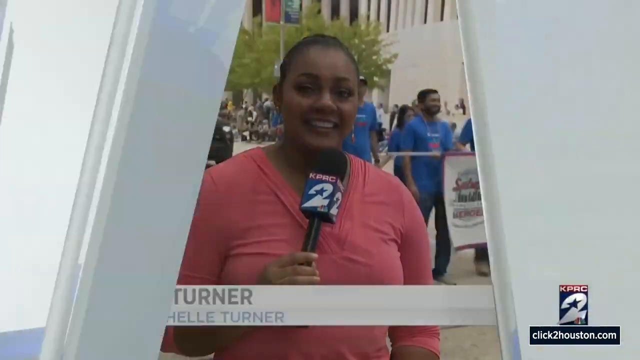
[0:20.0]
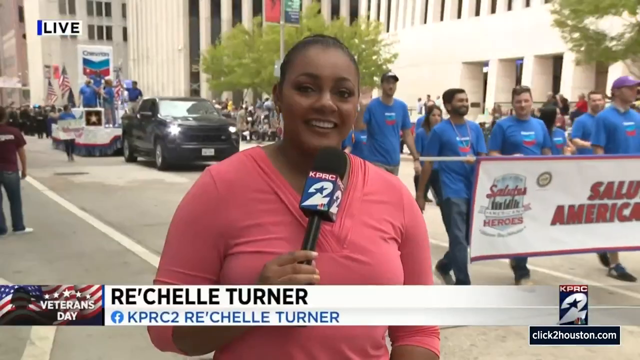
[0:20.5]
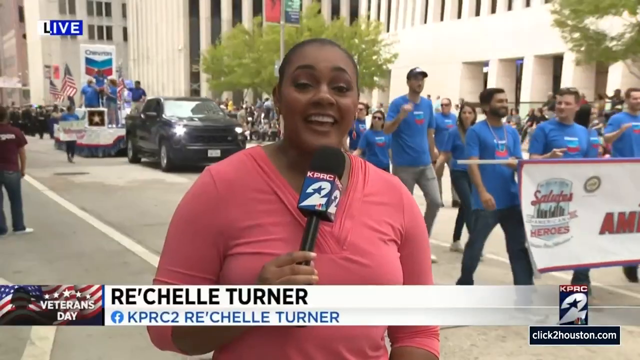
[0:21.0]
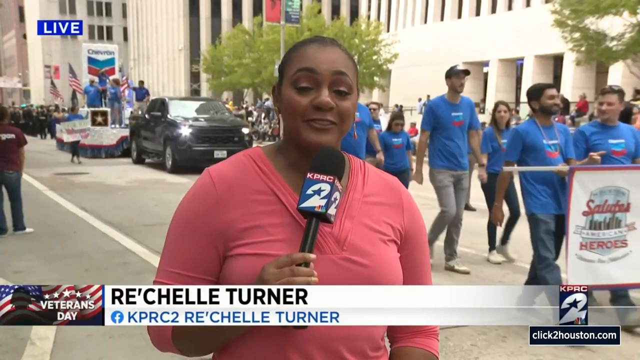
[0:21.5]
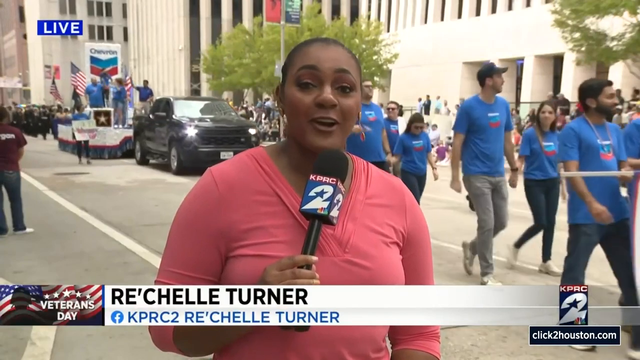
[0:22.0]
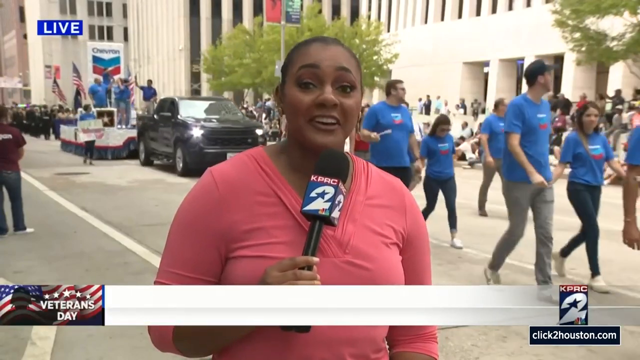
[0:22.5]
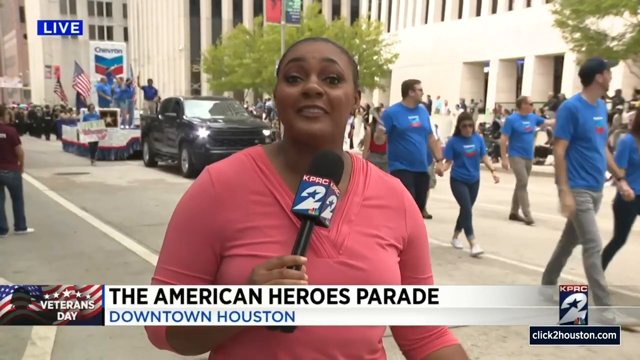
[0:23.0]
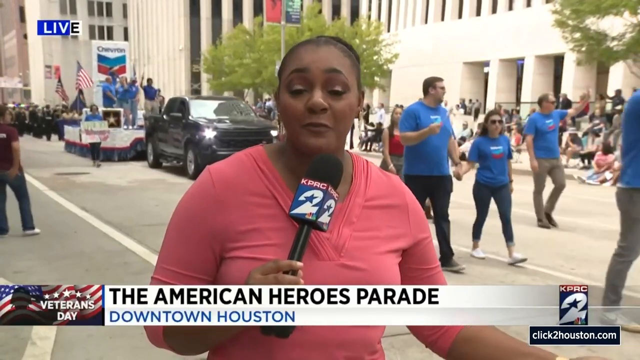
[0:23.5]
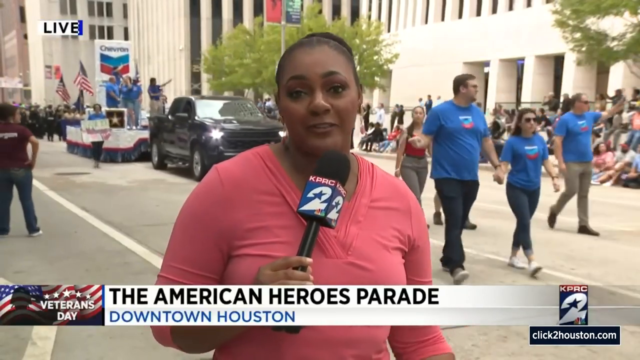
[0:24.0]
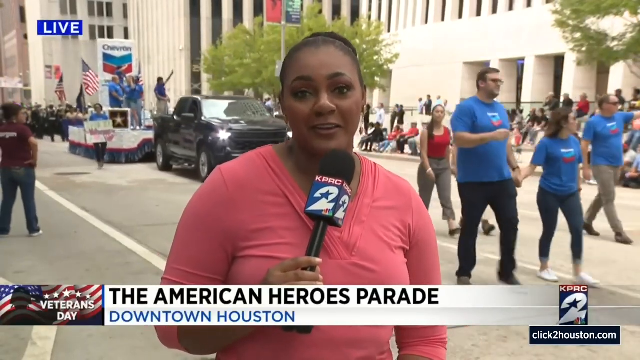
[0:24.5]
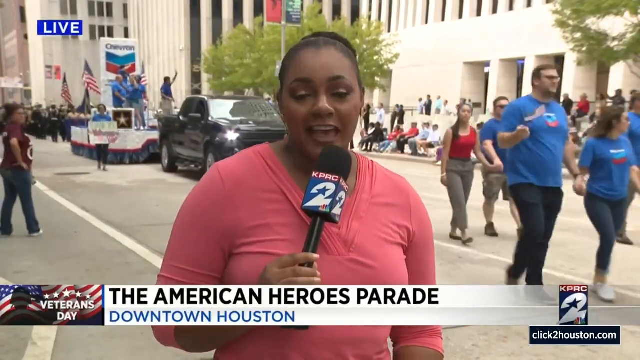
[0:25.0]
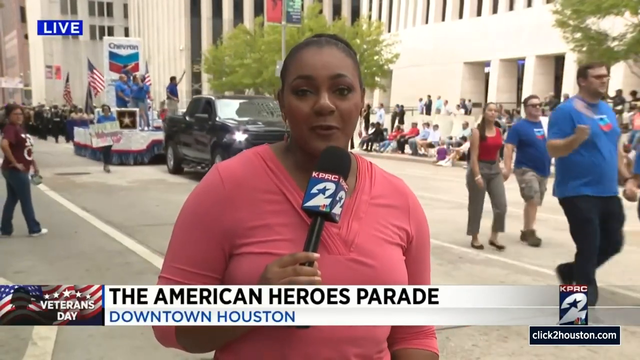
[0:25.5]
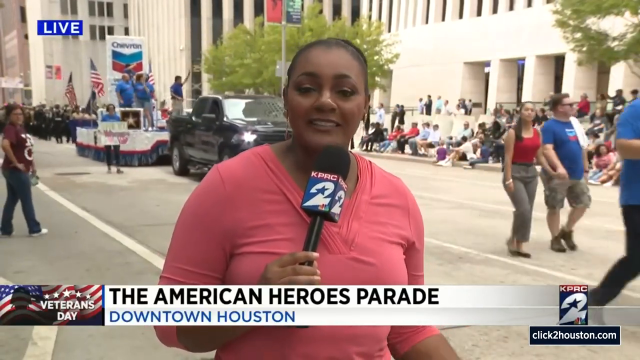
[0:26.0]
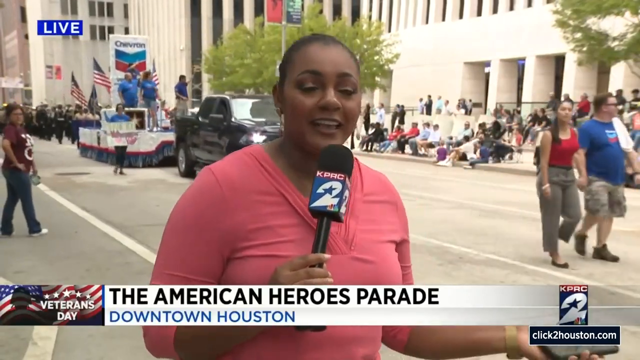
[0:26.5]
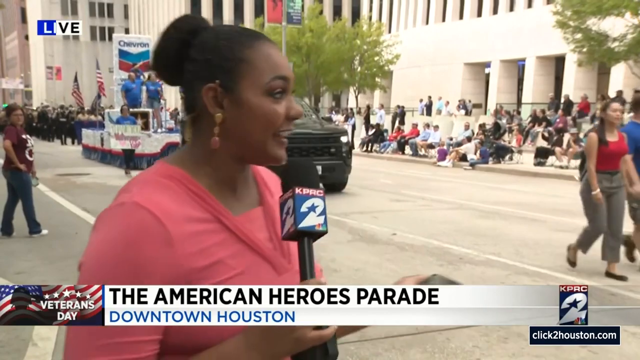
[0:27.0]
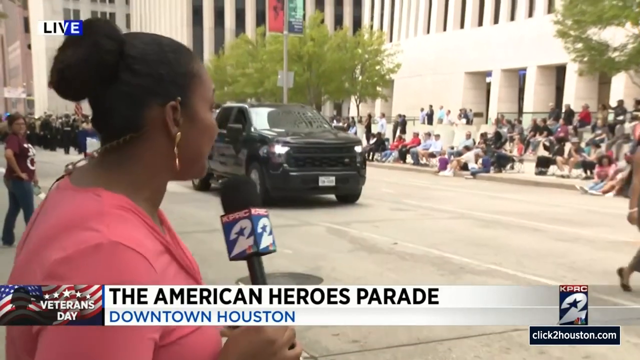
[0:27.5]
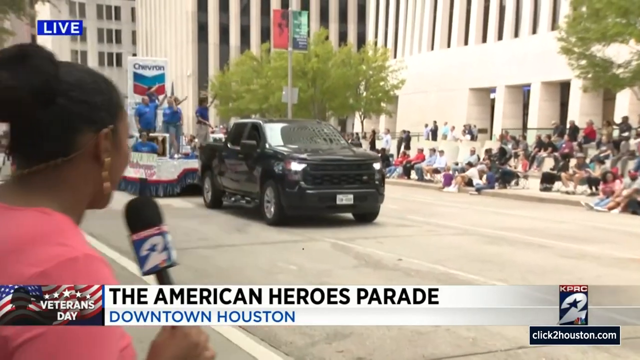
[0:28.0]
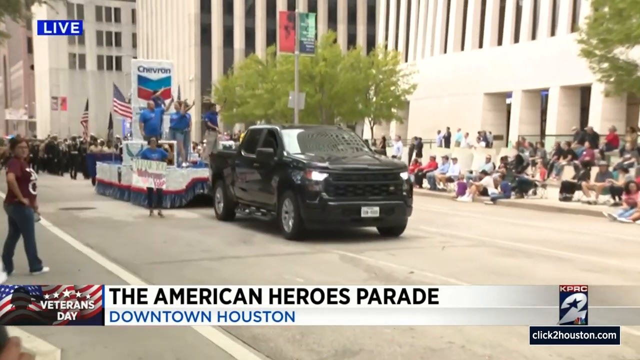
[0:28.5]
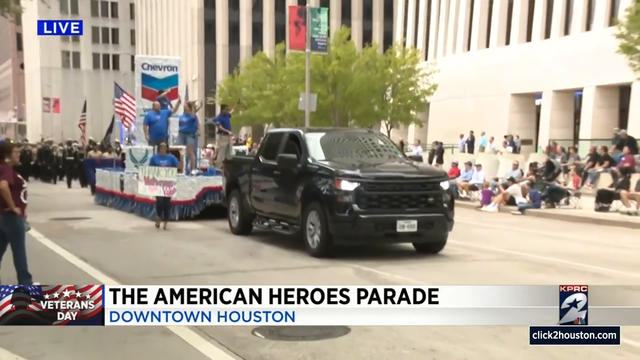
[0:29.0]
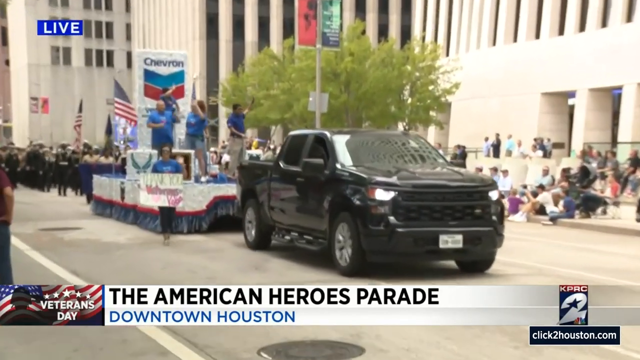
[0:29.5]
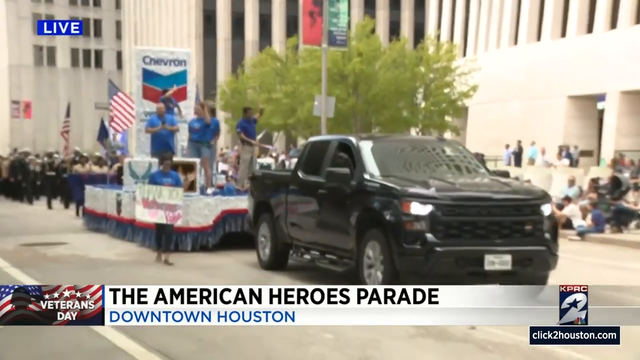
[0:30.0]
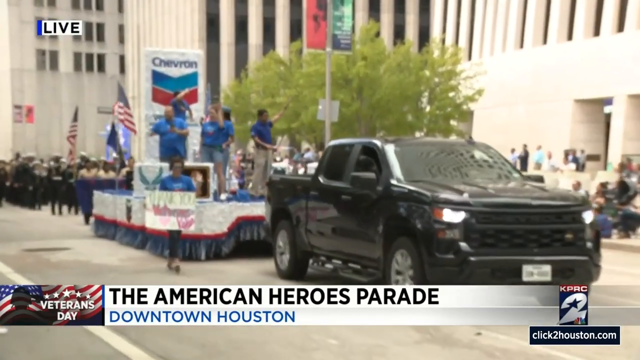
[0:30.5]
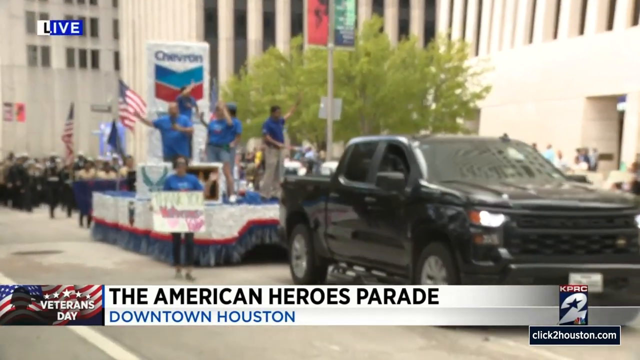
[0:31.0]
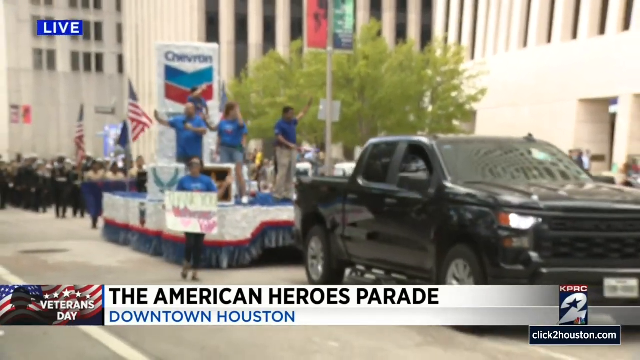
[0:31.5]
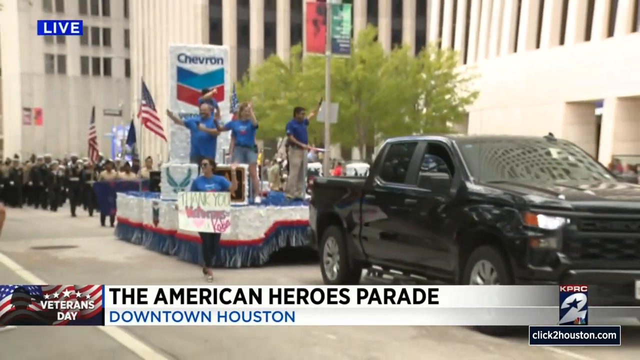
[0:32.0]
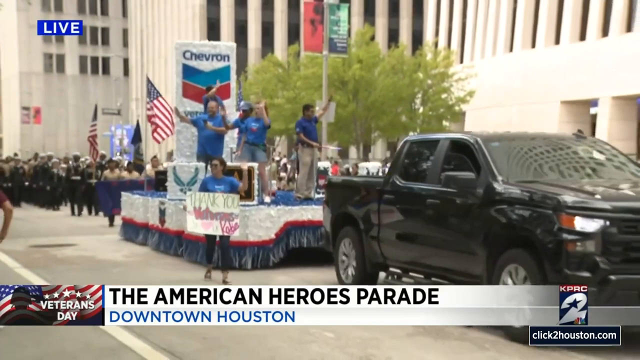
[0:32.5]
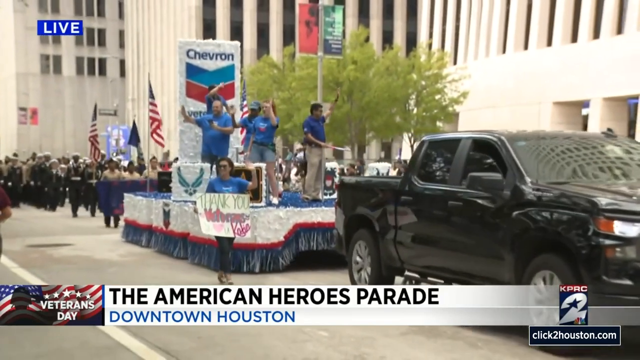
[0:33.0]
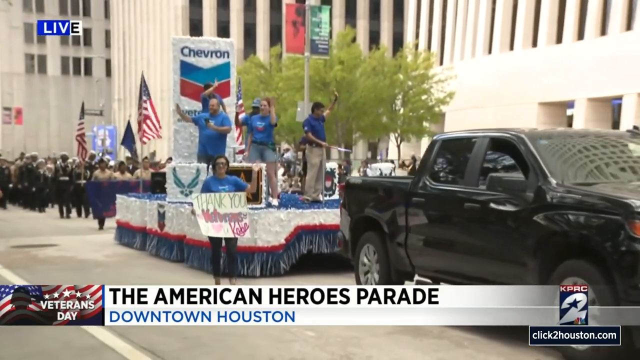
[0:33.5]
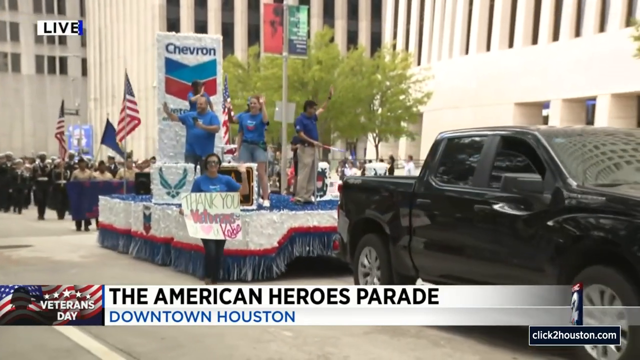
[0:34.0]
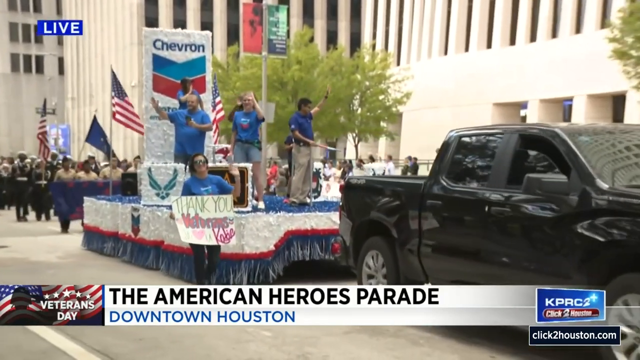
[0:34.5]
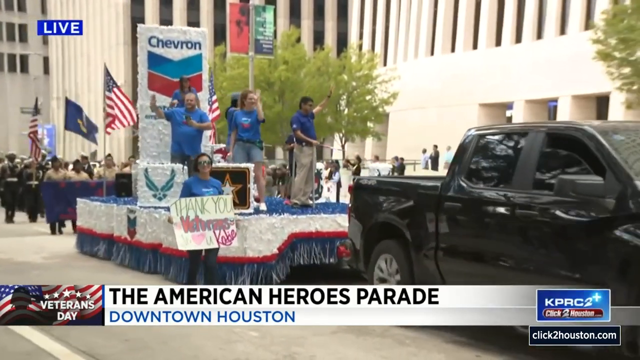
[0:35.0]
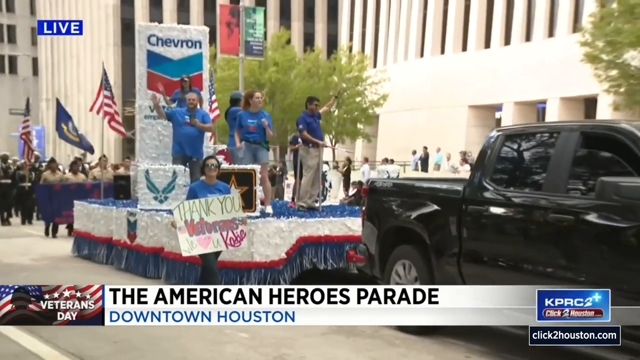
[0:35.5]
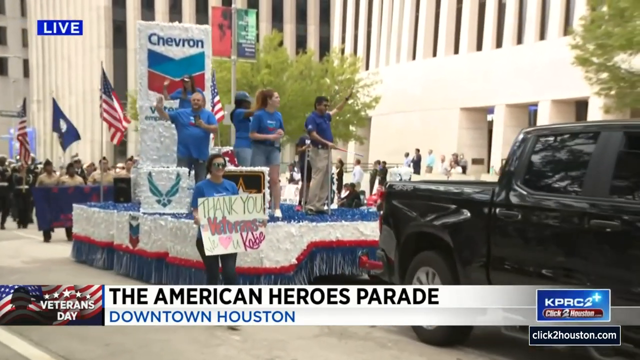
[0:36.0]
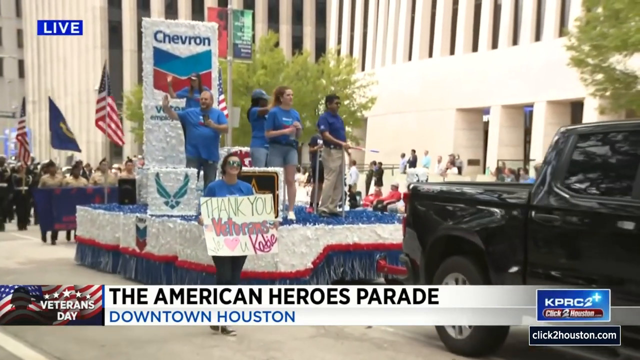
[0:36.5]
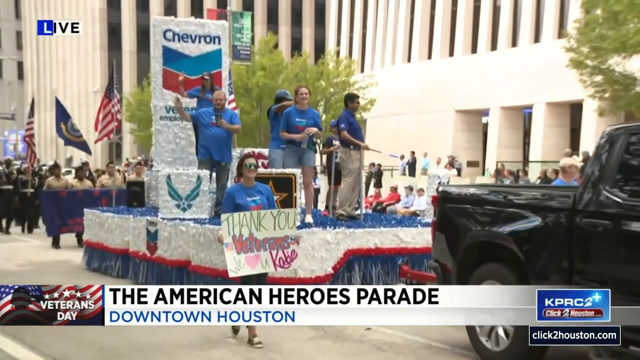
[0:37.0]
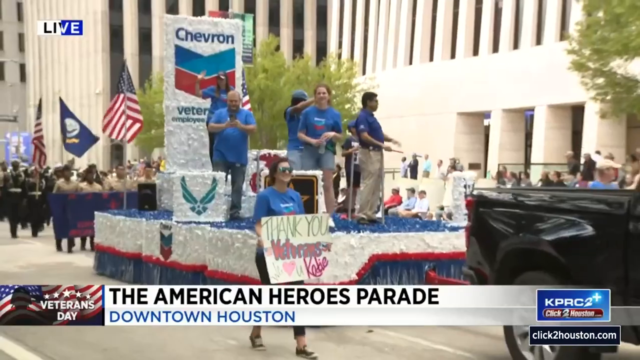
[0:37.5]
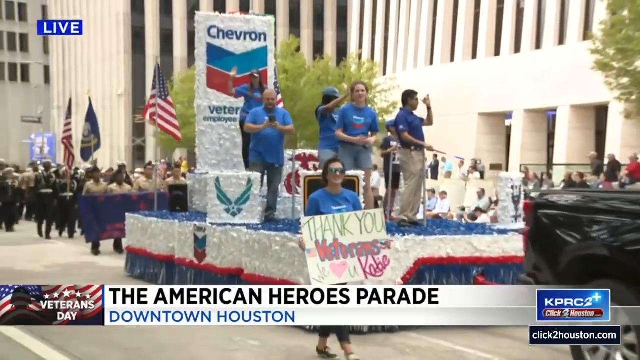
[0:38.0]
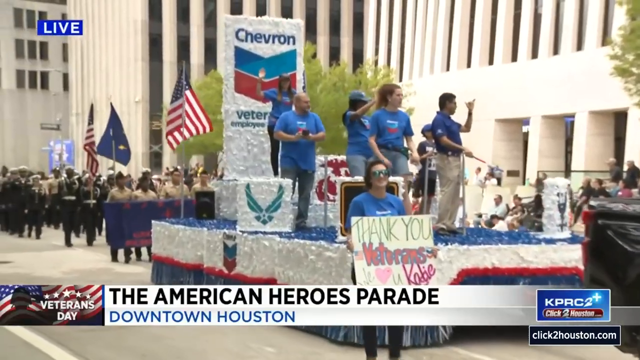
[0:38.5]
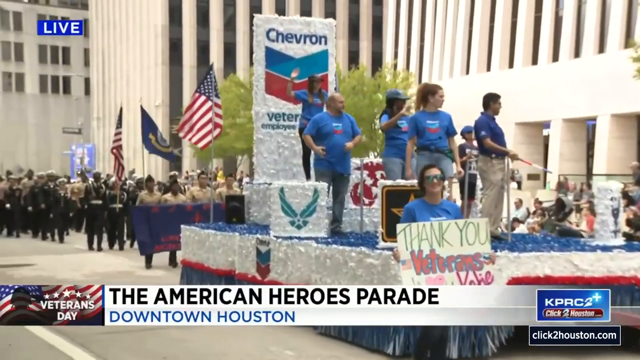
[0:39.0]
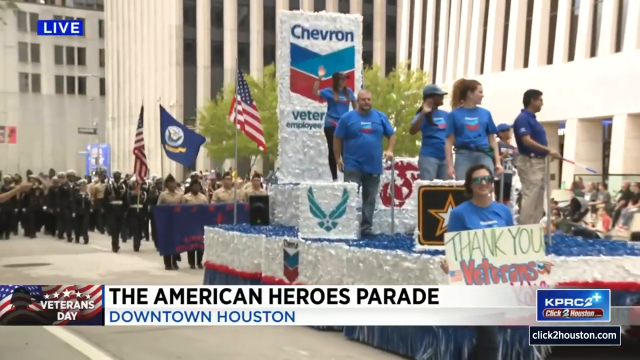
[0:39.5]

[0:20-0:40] The two newscasters sit at the desk in the studio. The screen wipes to video footage labeled "American Heroes Parade, downtown Houston," an overhead view of a city street, with a graphic in the corner that says "Live Sky 2." A female newscaster in a pink V-neck T-shirt holds a microphone bearing the channel's KPRC logo and the number two. Behind her is a parade, including a large black SUV with a parade float on the back that reads "Chevron" with the Chevron logo; the people on the float wear blue T-shirts and various bottoms. In front of the truck, other people in blue T-shirts hold a large banner. The newscaster stands off to the left side, out of the flow of the parade. On screen, a graphic says "Veterans Day" along with the reporter's name, "Rochelle Turner," and underneath it a Facebook icon with "KPRC 2 Rochelle Turner"; the opposite corner shows the KPRC channel logo and the click to houston.com logo. She points behind her at the parade, as though to emphasize how loud it is. She steps away to the side, and the camera zooms in on the parade as the Chevron float begins to move into frame.